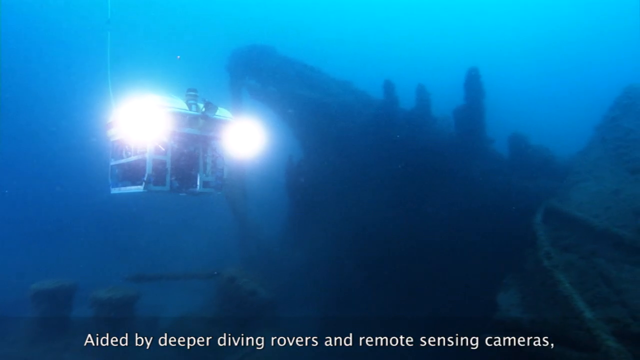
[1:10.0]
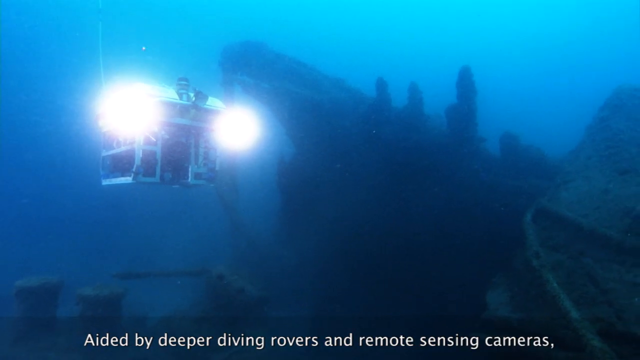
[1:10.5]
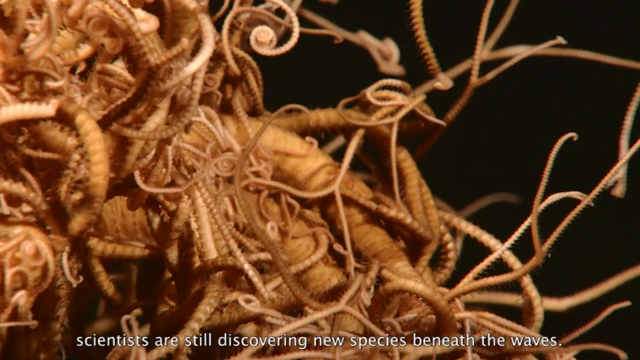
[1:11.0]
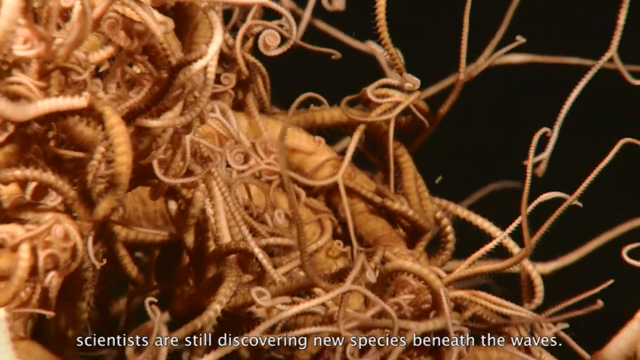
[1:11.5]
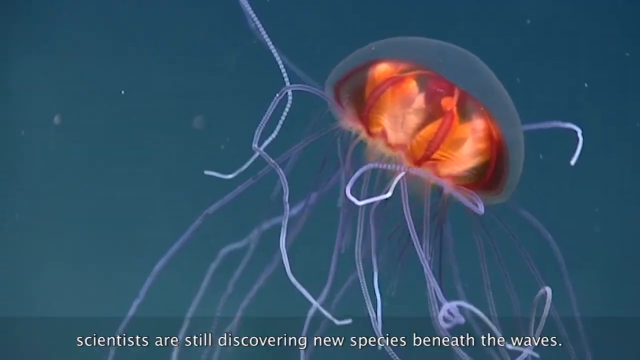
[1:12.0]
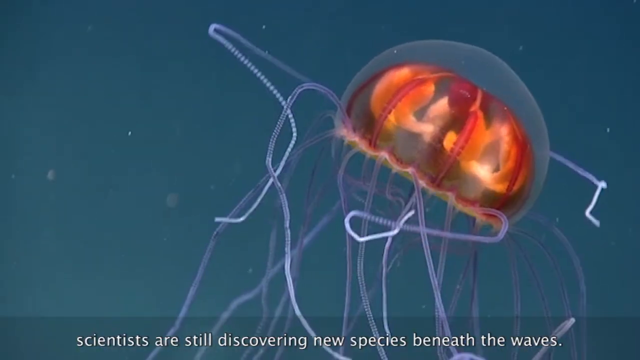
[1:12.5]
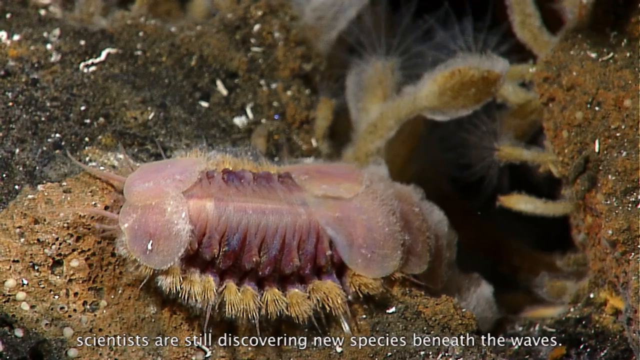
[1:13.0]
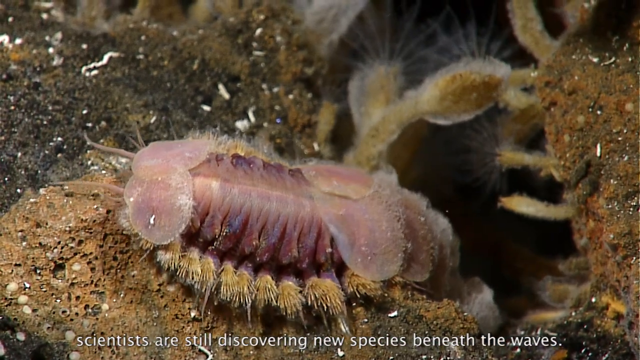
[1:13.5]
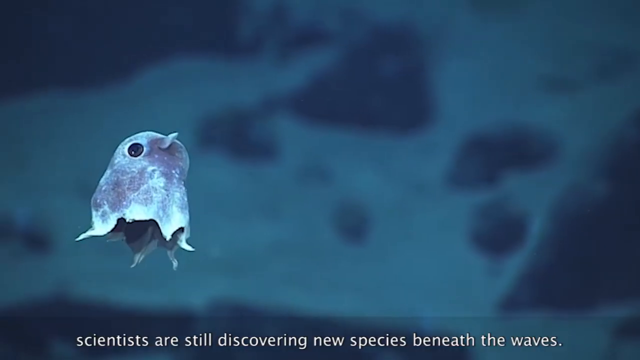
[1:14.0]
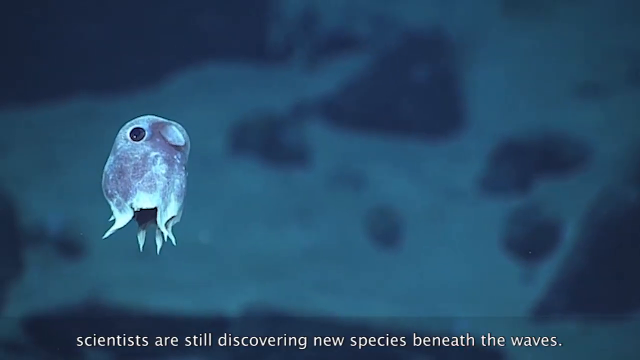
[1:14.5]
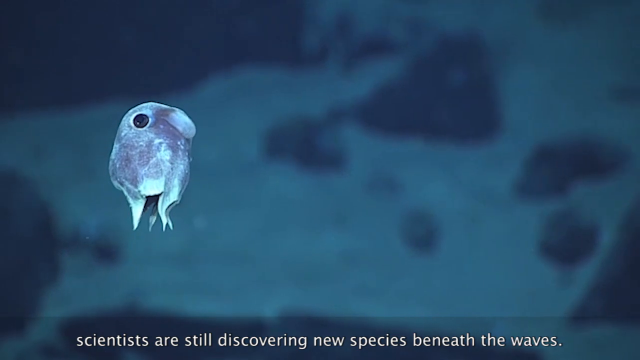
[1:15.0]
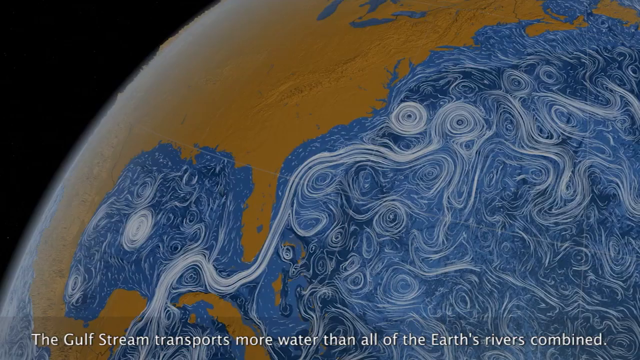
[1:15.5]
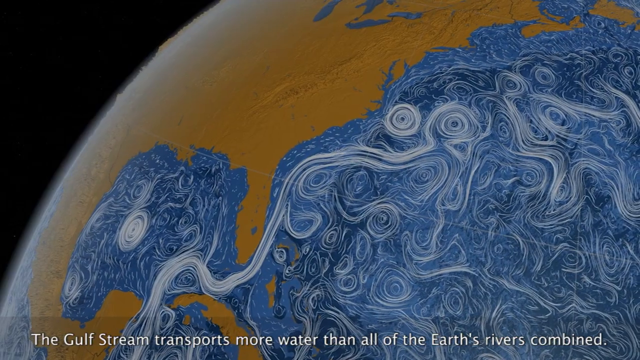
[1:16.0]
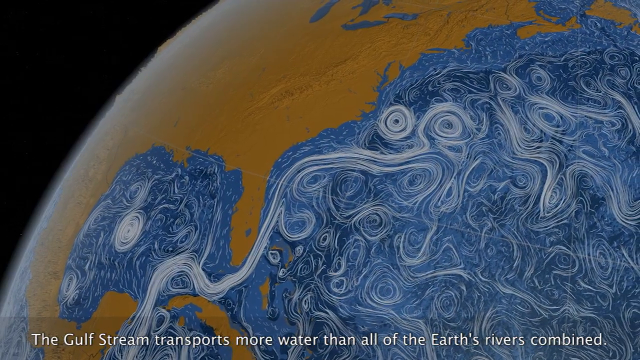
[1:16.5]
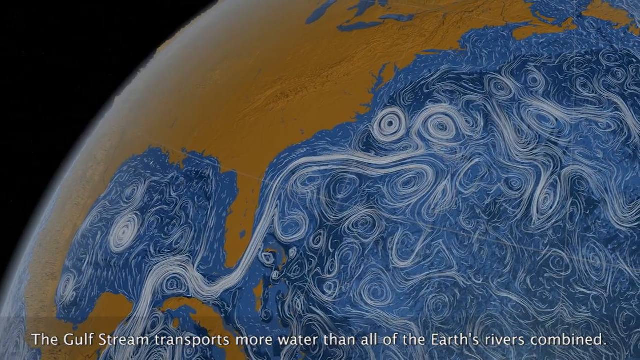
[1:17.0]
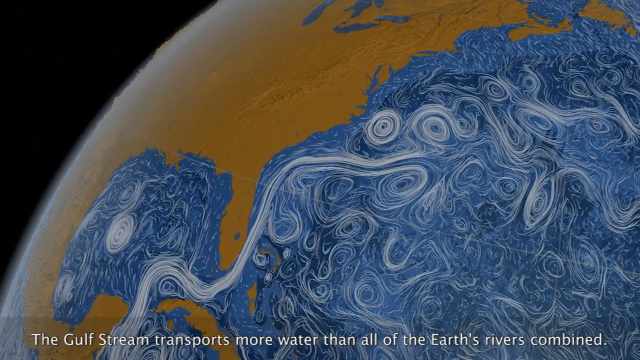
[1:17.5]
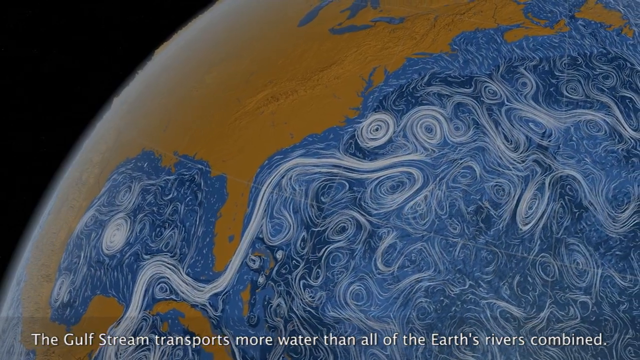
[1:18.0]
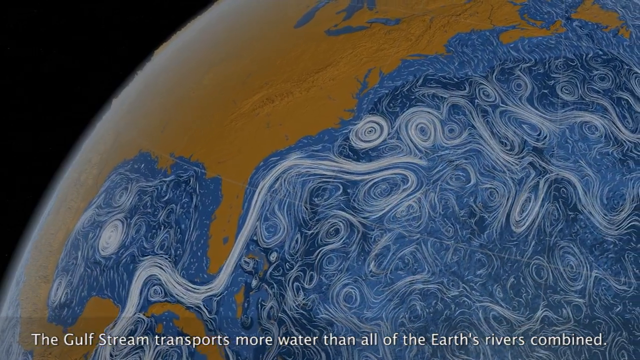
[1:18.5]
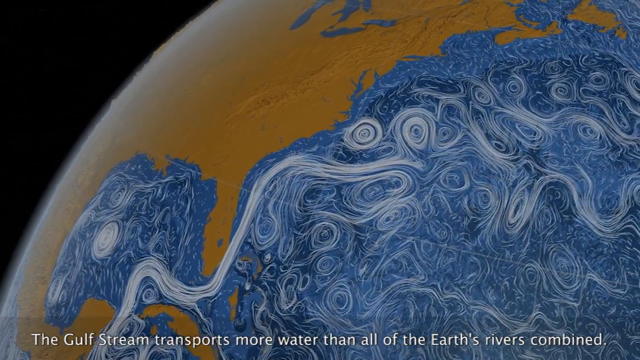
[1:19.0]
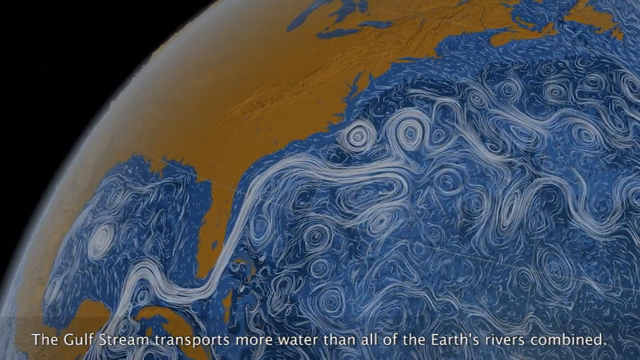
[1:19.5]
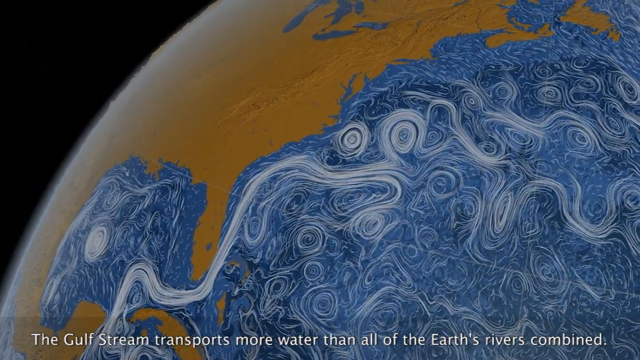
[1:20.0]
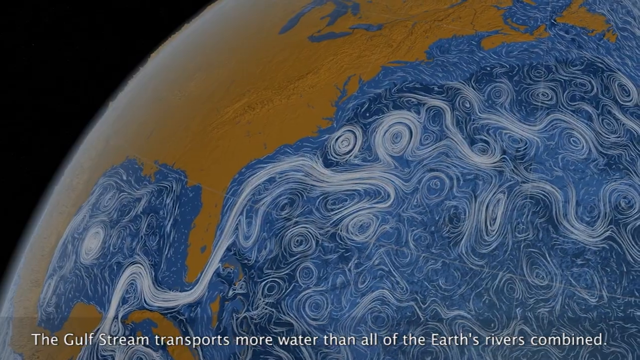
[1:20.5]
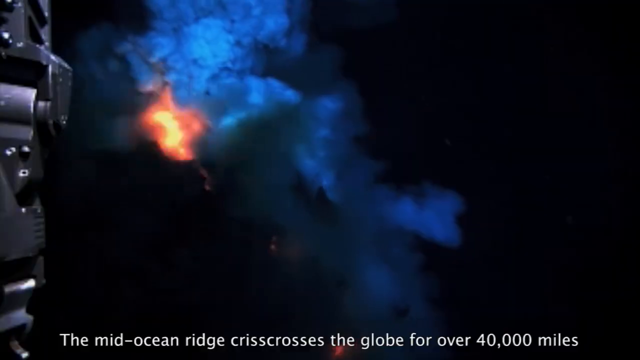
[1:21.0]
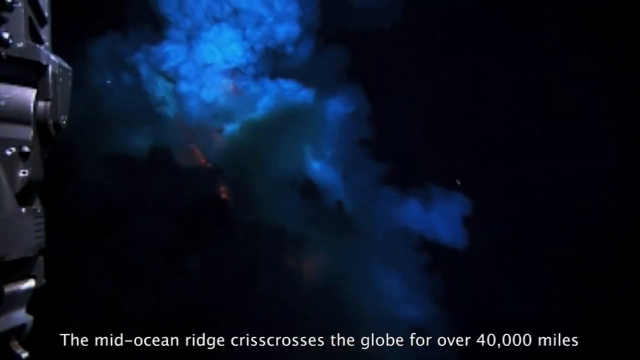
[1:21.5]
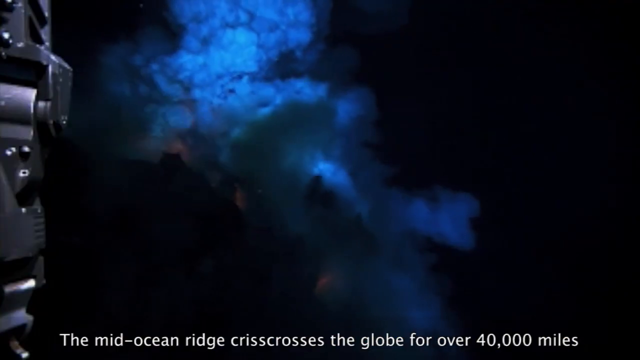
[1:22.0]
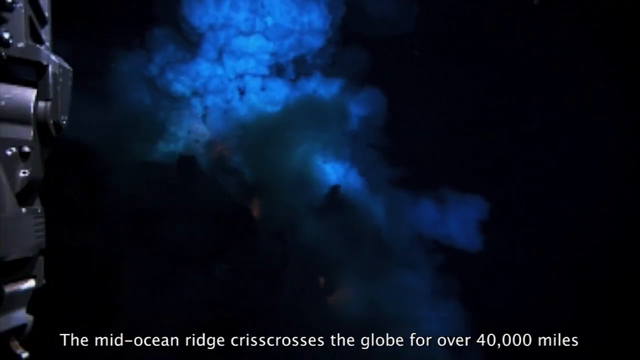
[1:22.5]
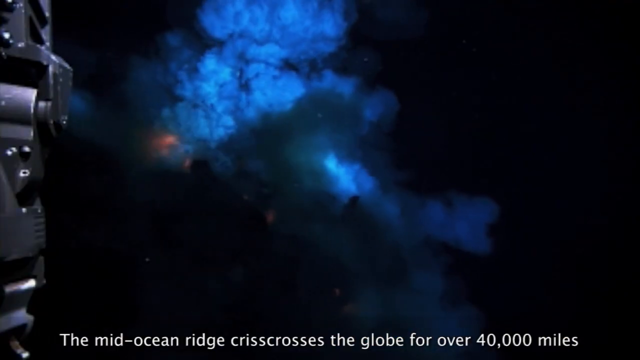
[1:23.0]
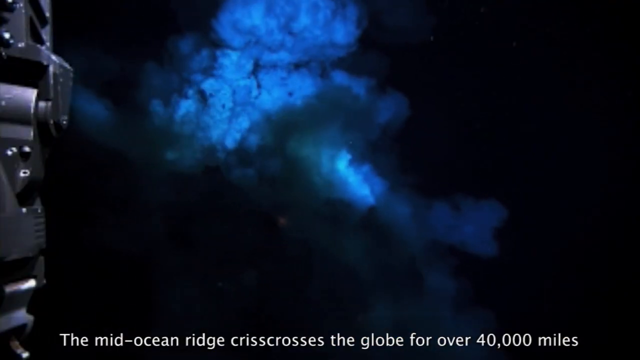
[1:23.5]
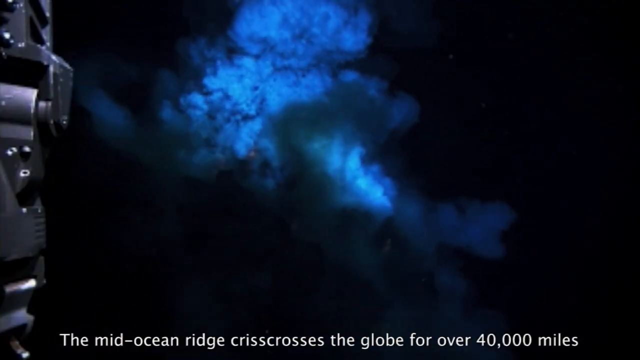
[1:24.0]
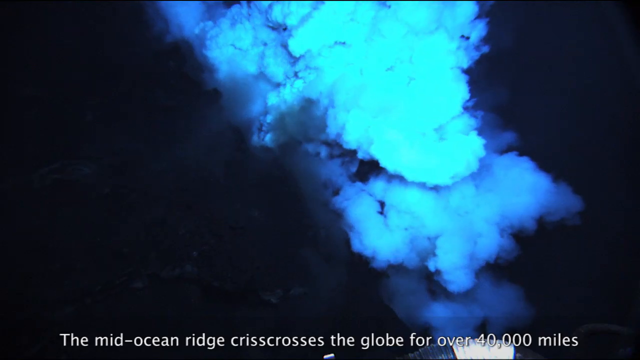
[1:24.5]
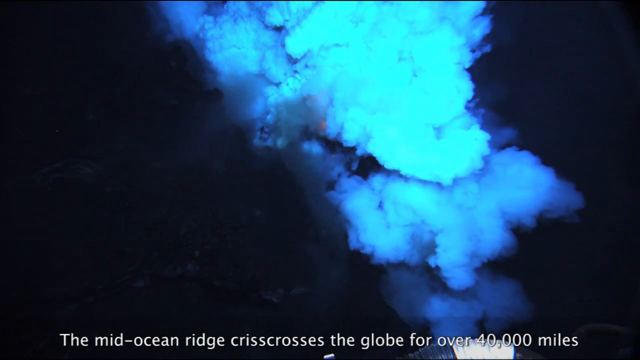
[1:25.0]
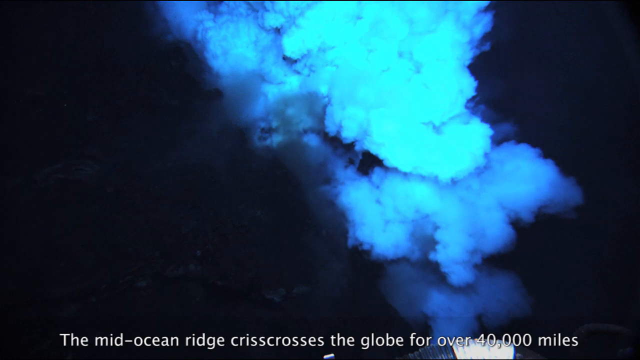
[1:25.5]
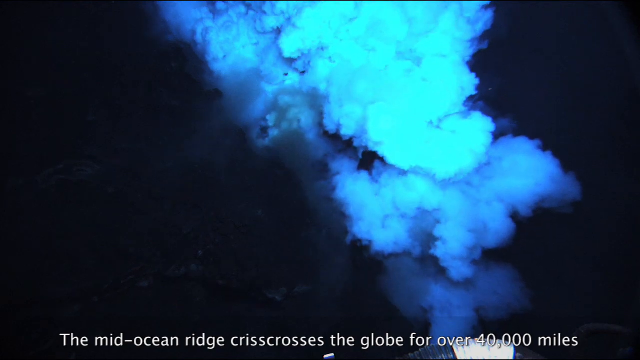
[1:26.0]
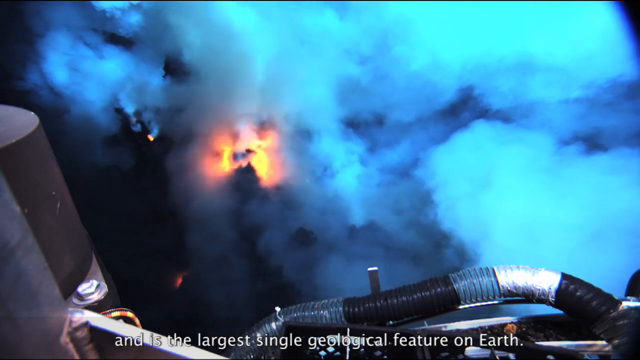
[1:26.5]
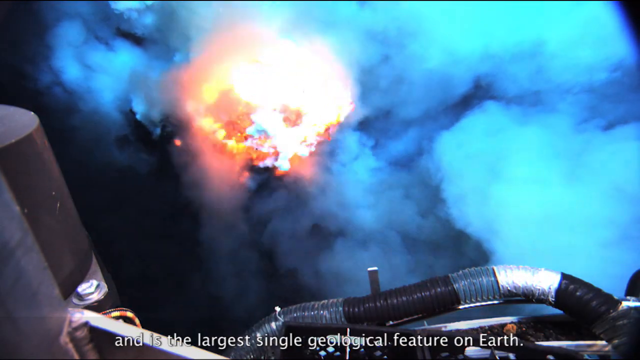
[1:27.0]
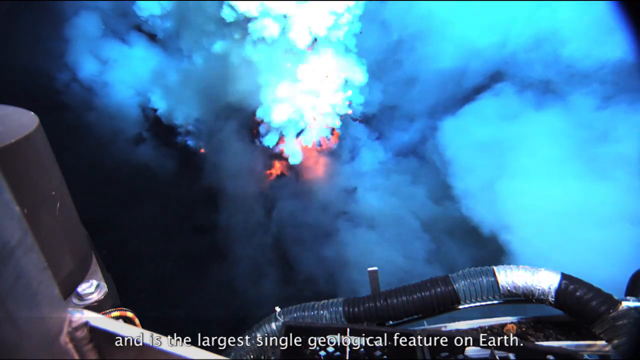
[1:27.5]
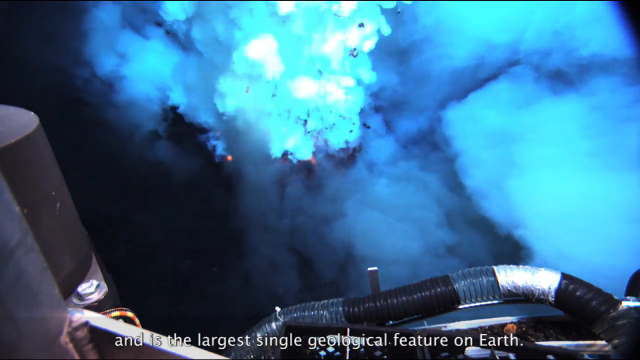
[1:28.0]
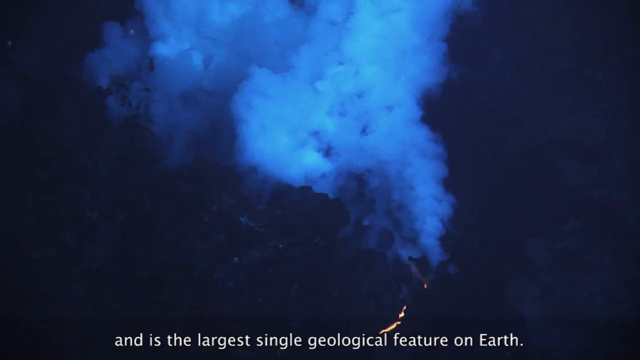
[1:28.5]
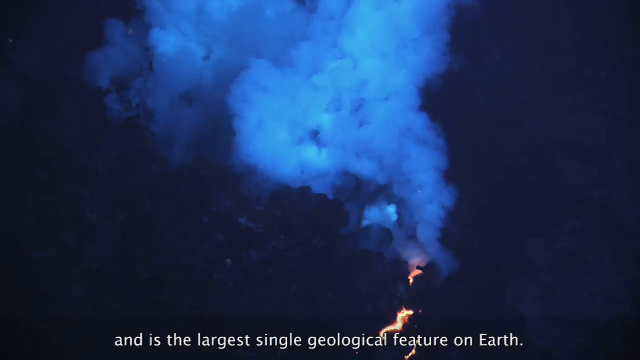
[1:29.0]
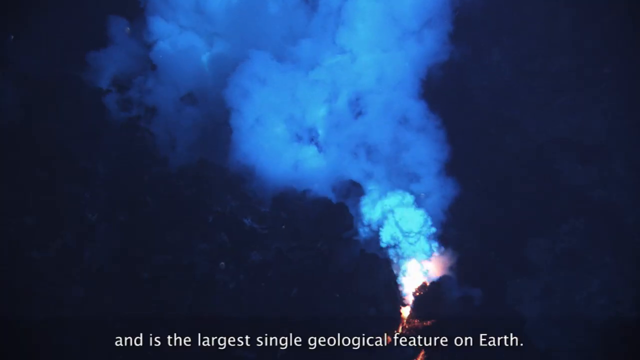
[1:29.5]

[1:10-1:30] A submarine of some kind is shown, along with different strange animals found in parts of the ocean. Text reads "The Gulf Stream, the Mid-Ocean Ridge crisscrosses the globe for over 40,000 miles." The video seems to touch on oil and mining in the ocean. Text then reads "For more UN videos visit www.un.org."